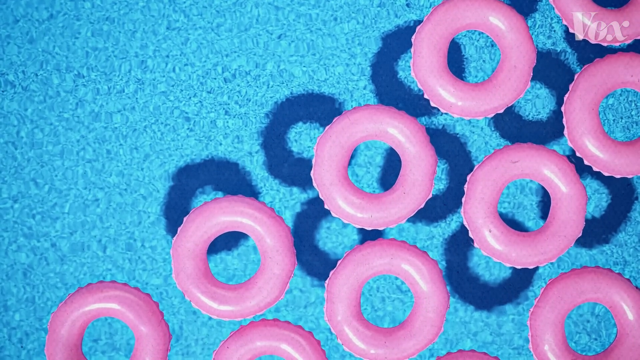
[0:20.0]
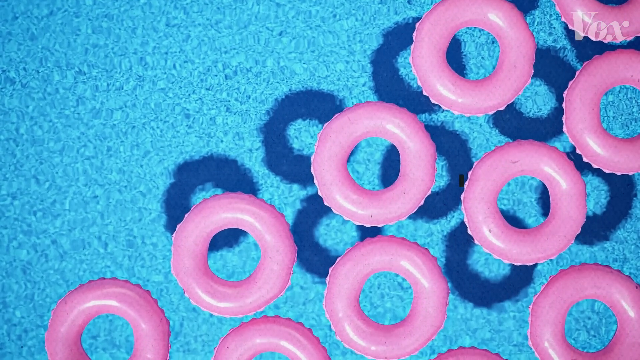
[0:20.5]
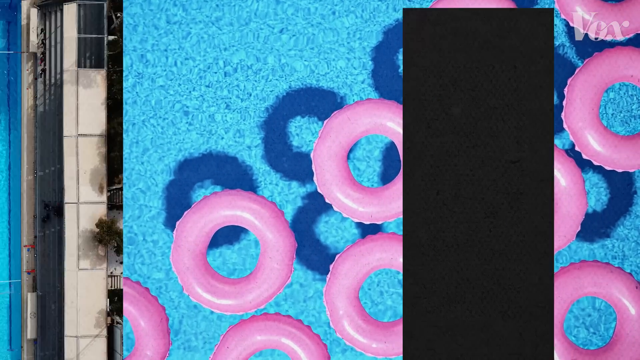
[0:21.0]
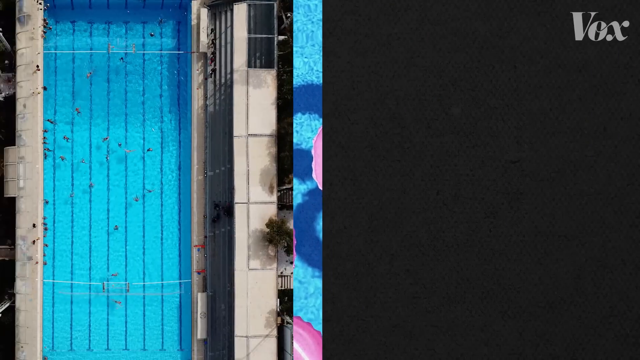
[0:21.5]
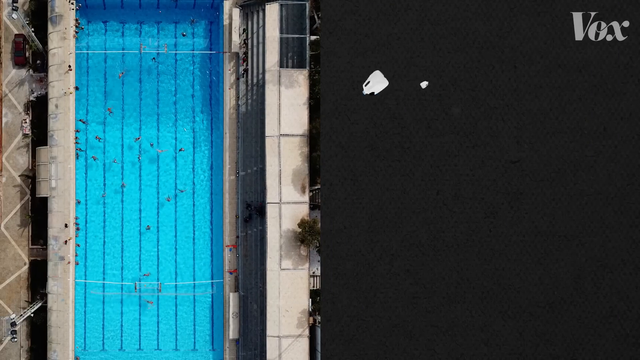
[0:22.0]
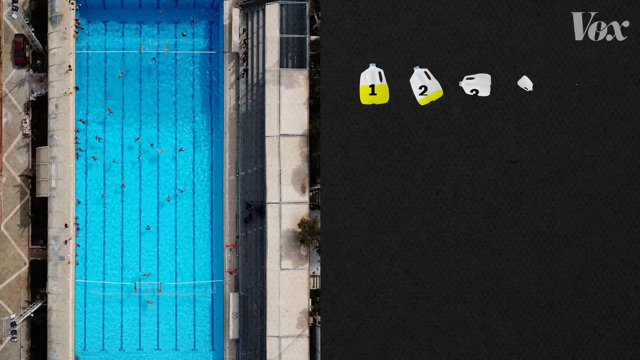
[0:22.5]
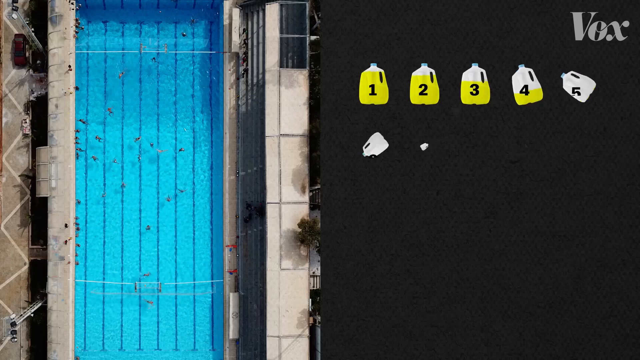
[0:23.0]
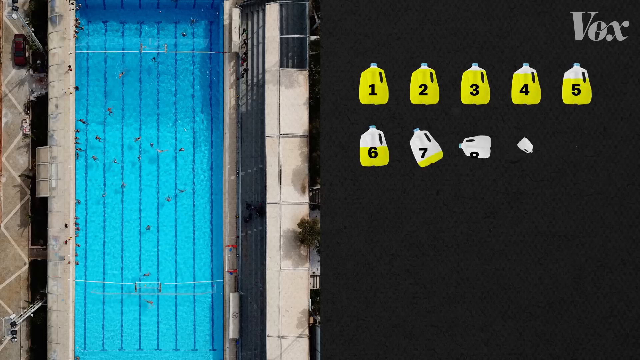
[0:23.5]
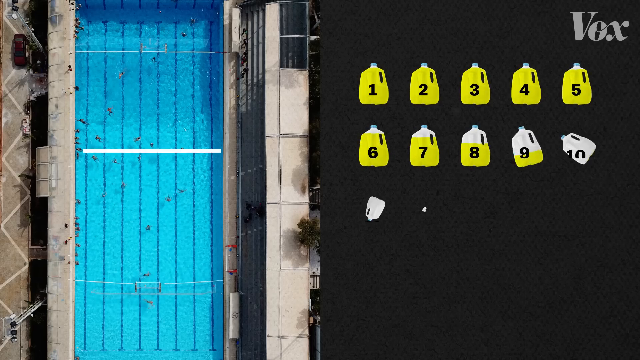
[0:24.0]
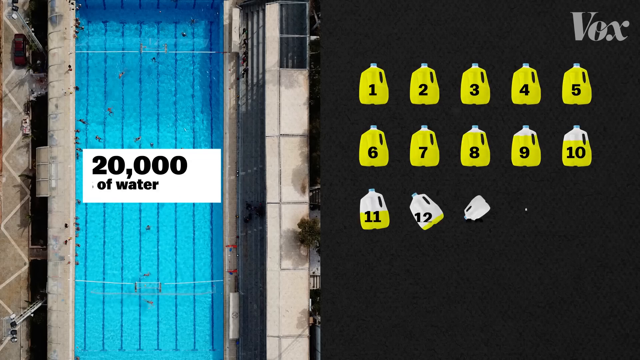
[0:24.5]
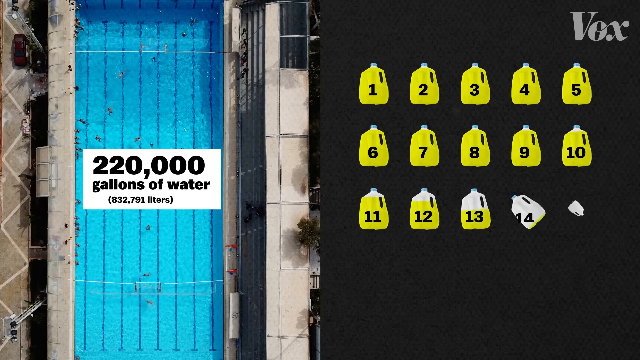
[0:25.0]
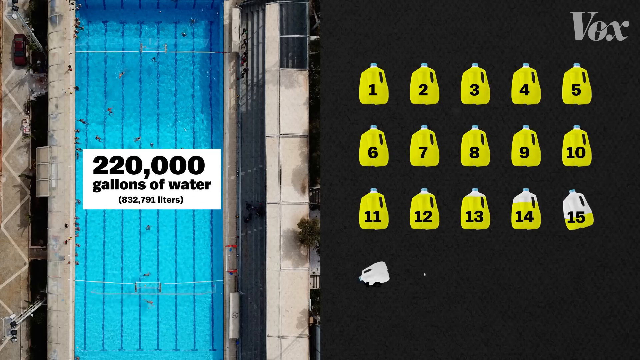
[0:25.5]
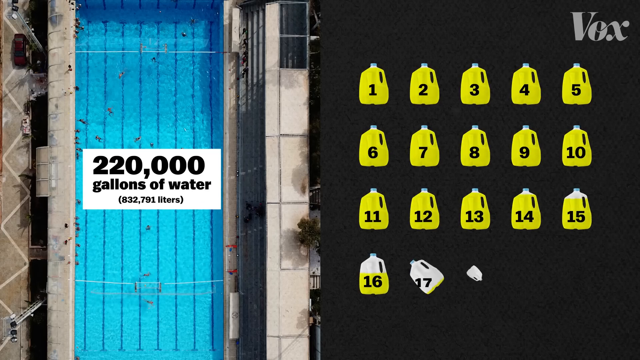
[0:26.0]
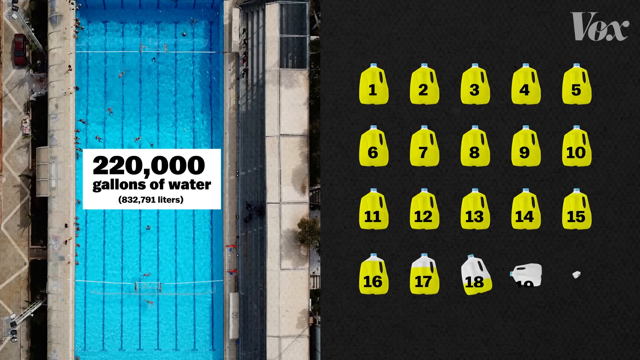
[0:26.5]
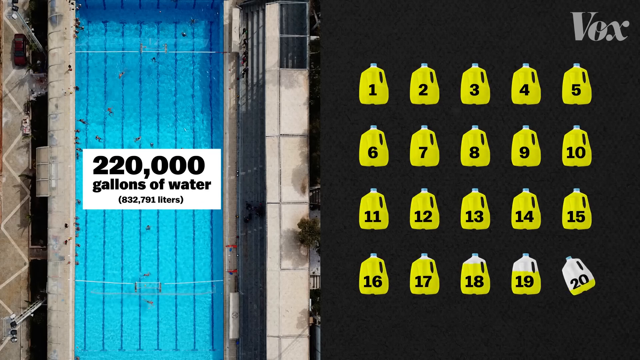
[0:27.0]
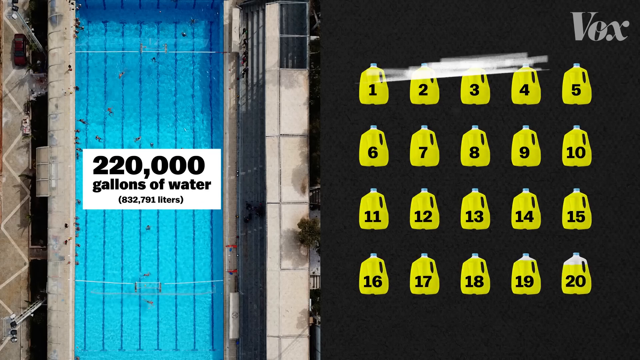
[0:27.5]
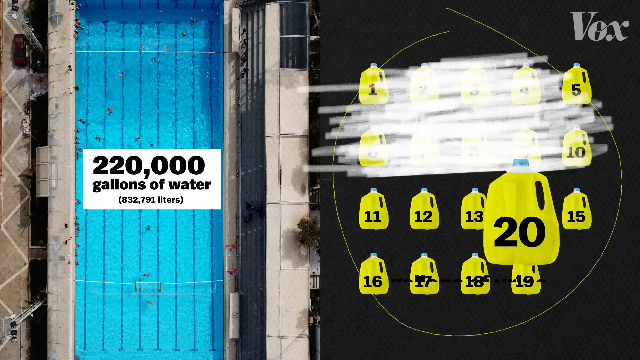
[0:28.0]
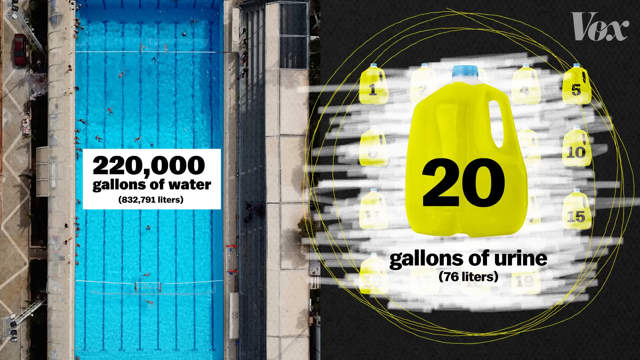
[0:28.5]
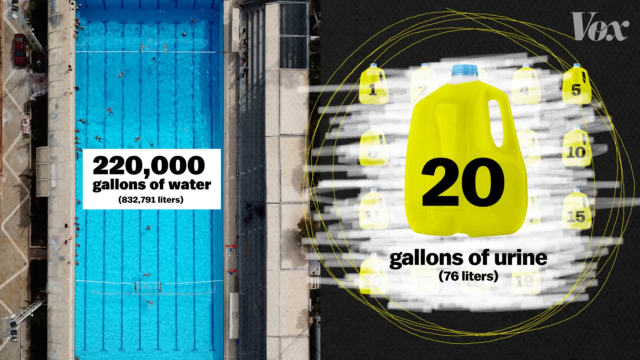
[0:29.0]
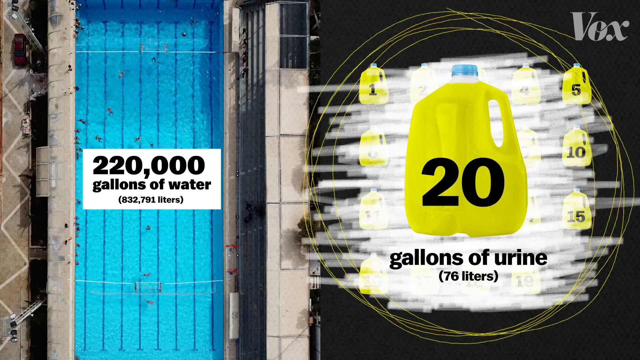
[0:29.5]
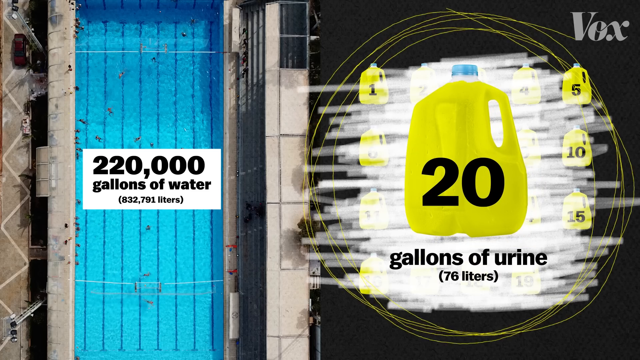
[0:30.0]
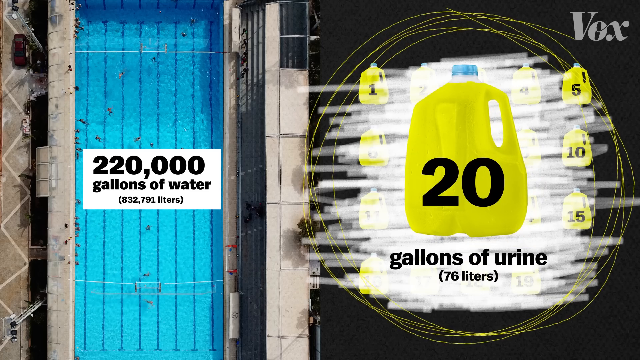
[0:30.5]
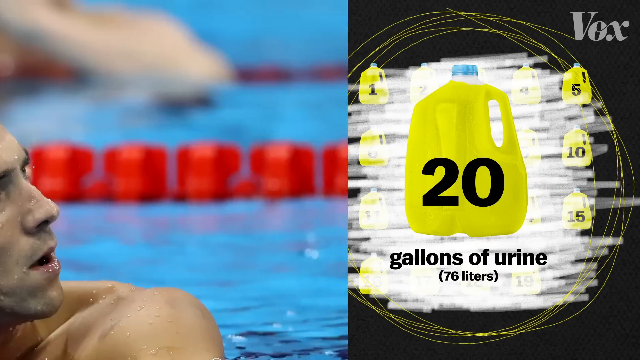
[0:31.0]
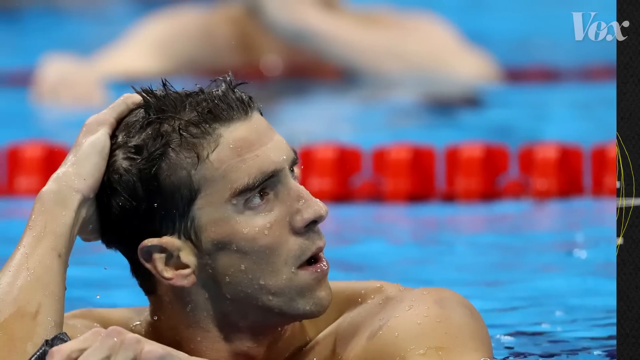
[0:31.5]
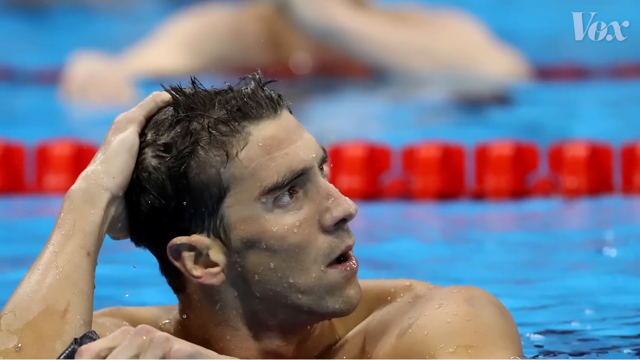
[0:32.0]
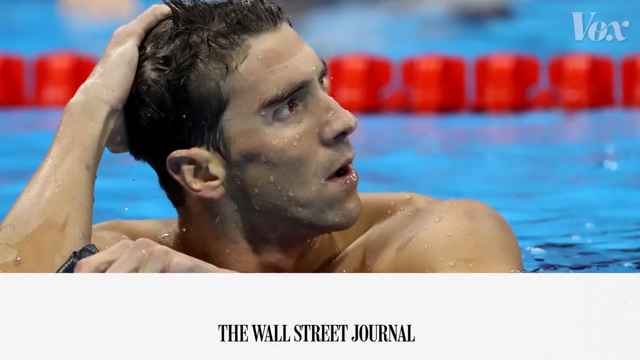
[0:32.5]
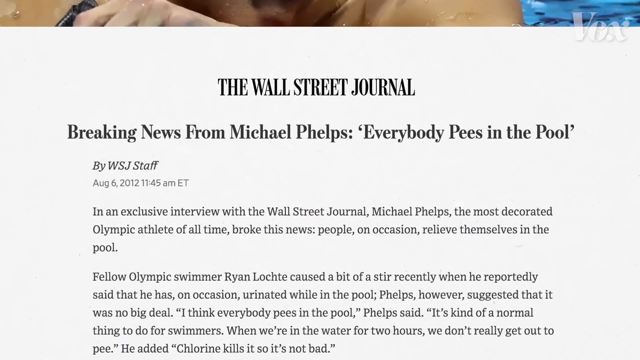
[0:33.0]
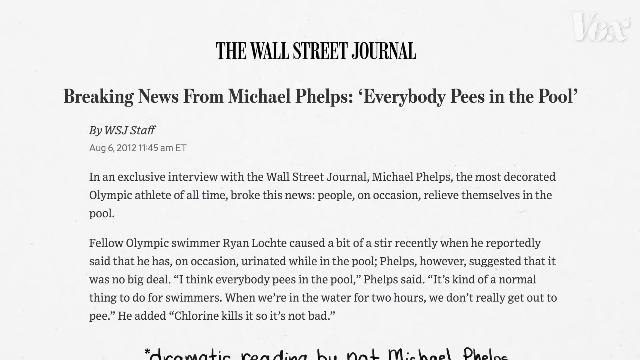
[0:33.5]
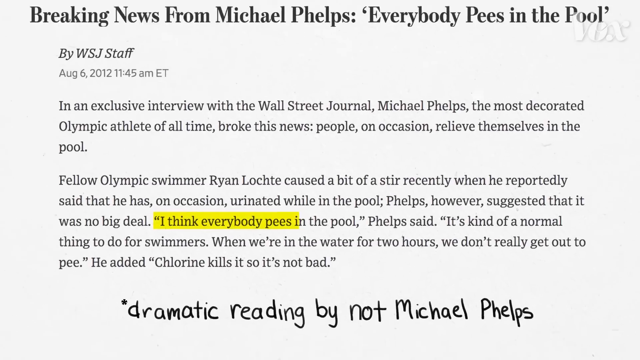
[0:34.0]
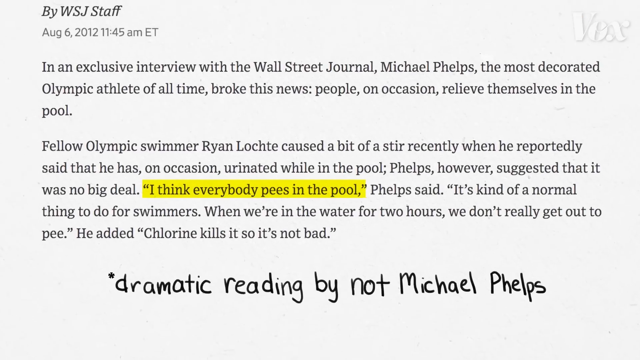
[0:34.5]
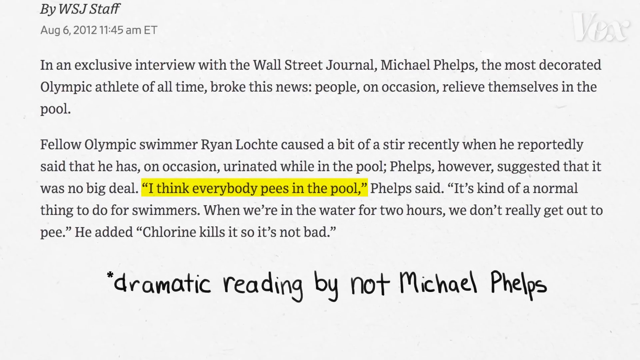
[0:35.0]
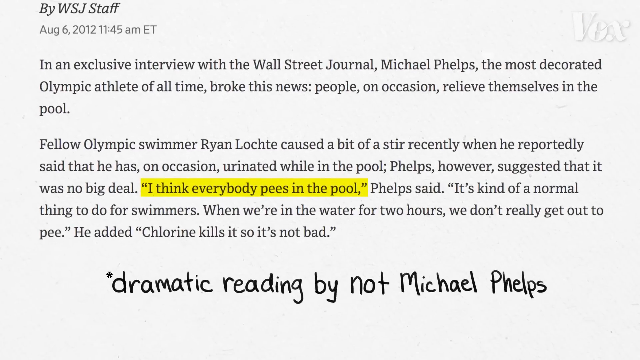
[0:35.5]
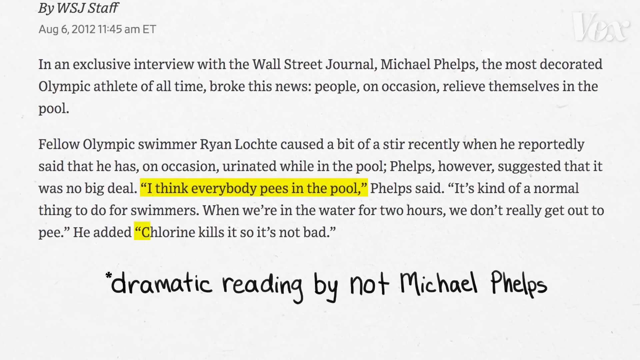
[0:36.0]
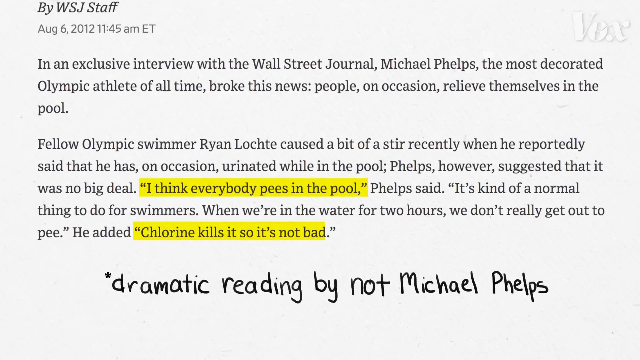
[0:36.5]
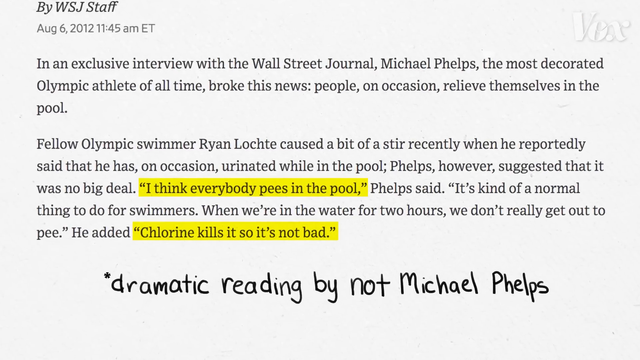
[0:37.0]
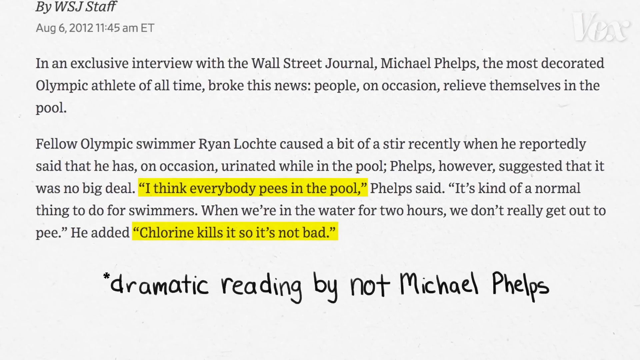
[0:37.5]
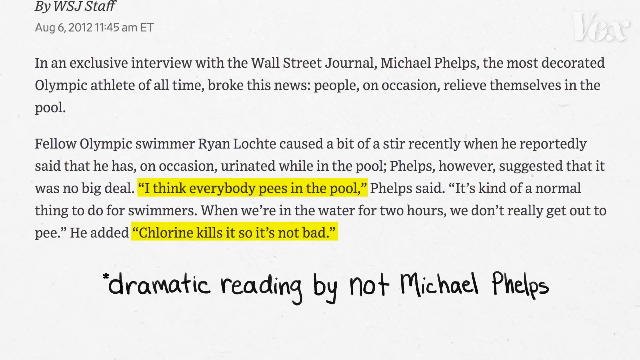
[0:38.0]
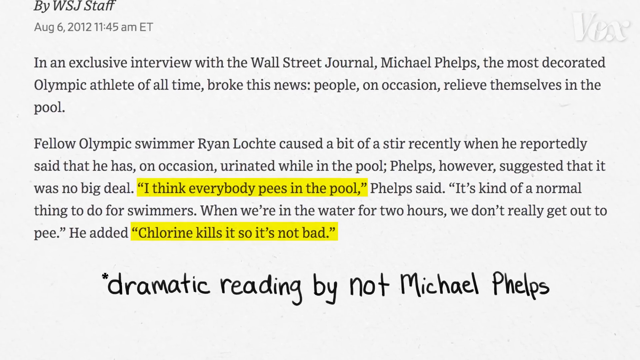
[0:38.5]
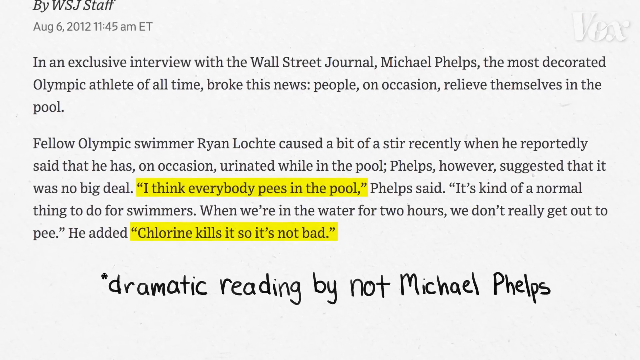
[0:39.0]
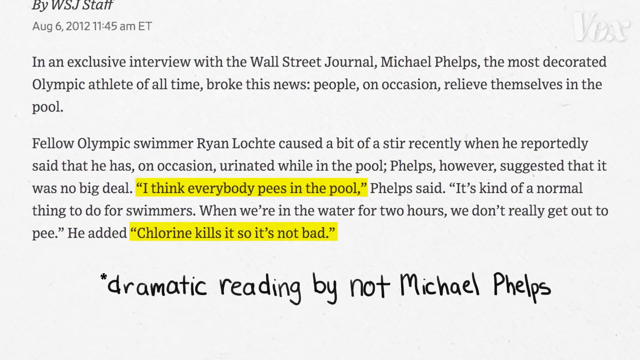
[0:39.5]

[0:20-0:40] An aerial view shows what looks like a pool on the left, kind of like an Olympic pool: rectangular and apparently with lanes. On the right is what looks like jugs of water, 20 of them, each with a number in front of it from 1 through 20. All of the jugs up to number 18 have a yellow fluid in them; number 19 is almost to the top, and number 20 is about halfway. On the left the text reads "220,000 gallons of water" and "832,791 liters." That is then scratched out, and on the right it reads "20 gallons of urine, 76 liters." The view pans to a different screen with a picture of Michael Phelps in the pool, brushing his hair back with his left hand, and text reading "breaking news from Michael Phelps everybody pees in the pool," followed by "dramatic reading by not Michael Phelps."